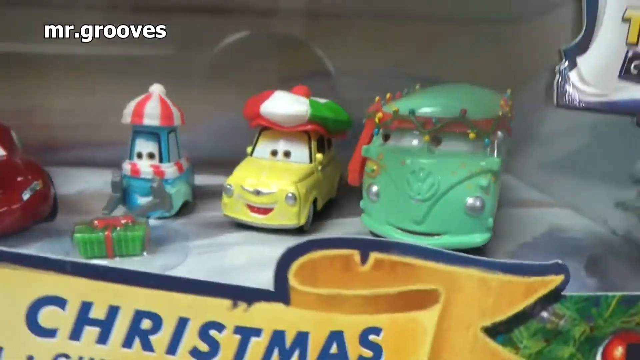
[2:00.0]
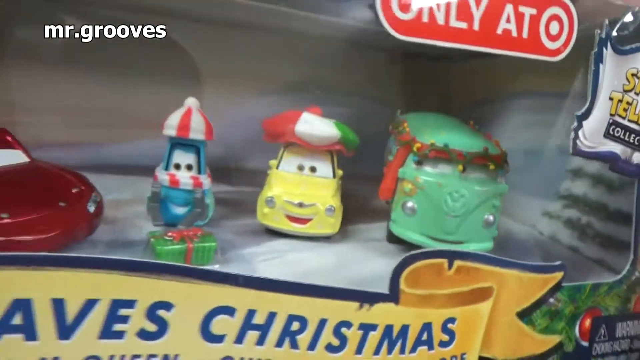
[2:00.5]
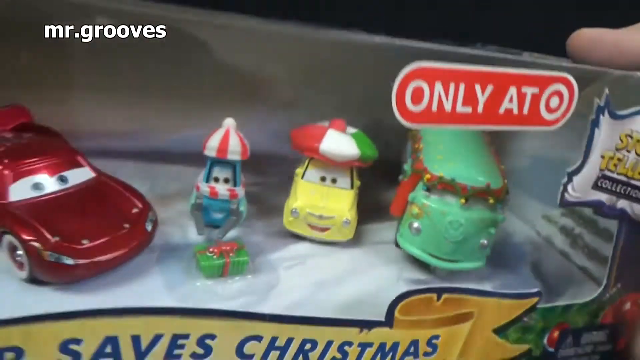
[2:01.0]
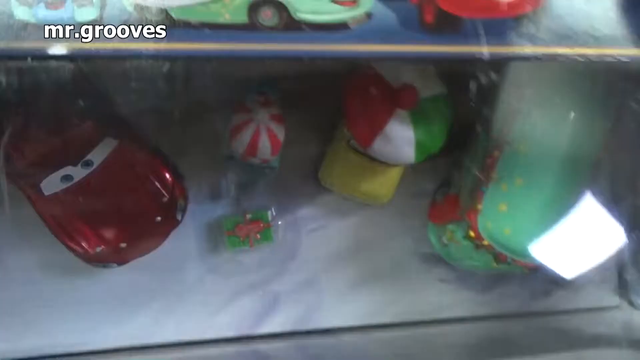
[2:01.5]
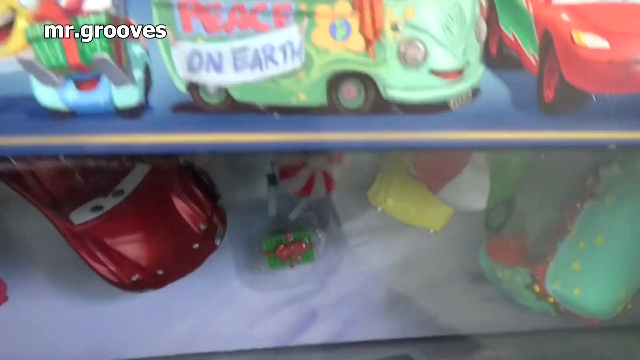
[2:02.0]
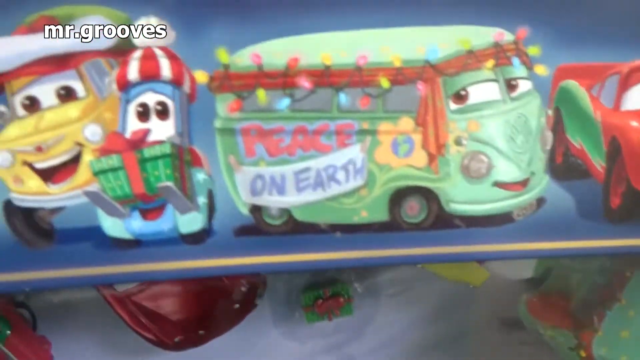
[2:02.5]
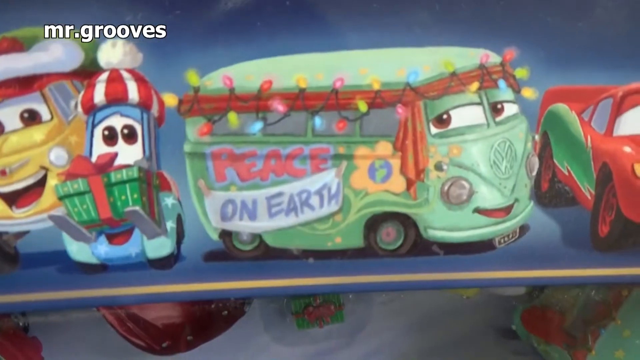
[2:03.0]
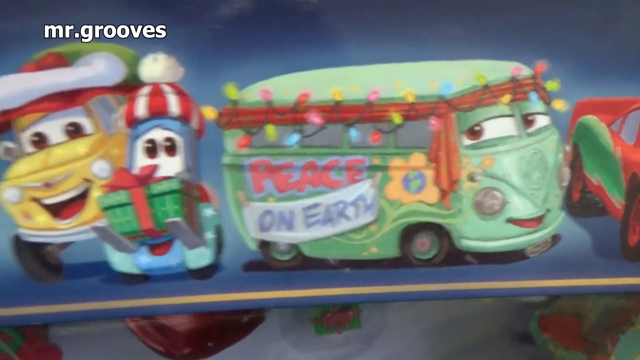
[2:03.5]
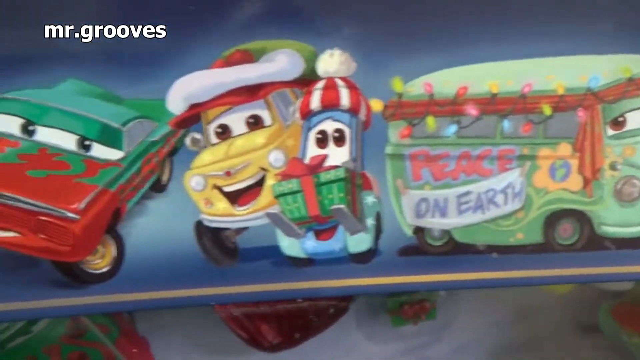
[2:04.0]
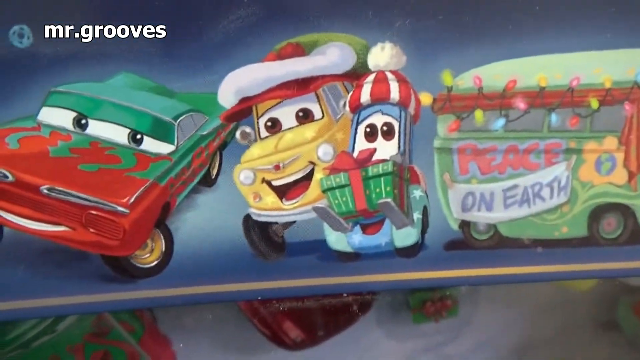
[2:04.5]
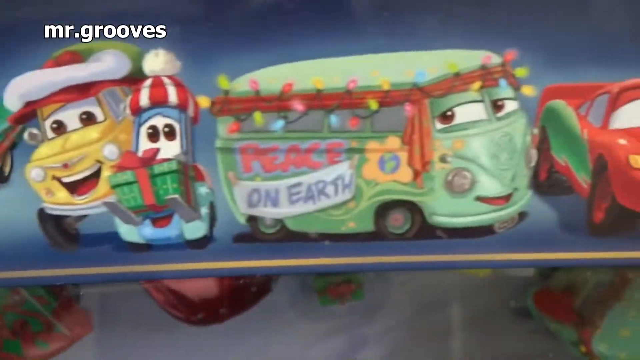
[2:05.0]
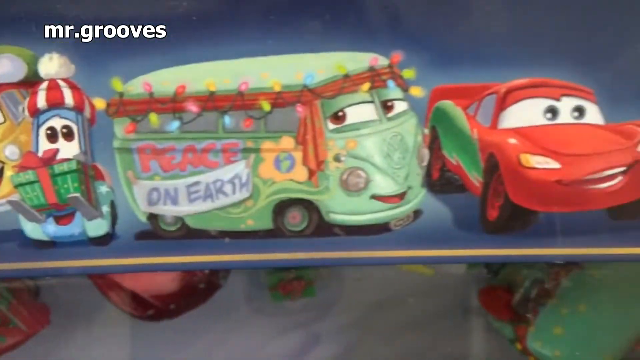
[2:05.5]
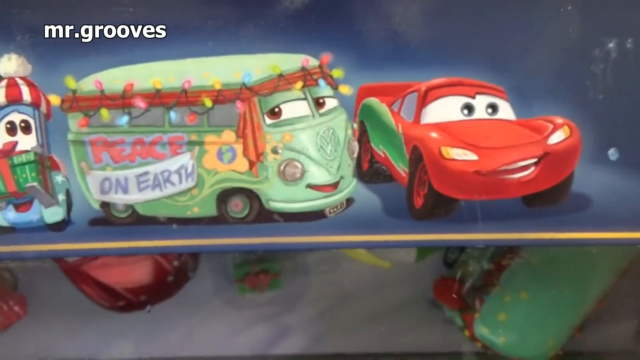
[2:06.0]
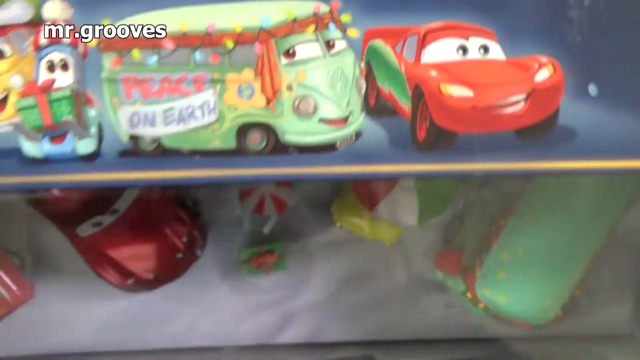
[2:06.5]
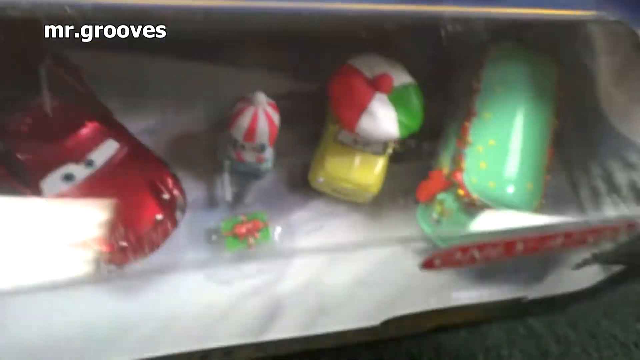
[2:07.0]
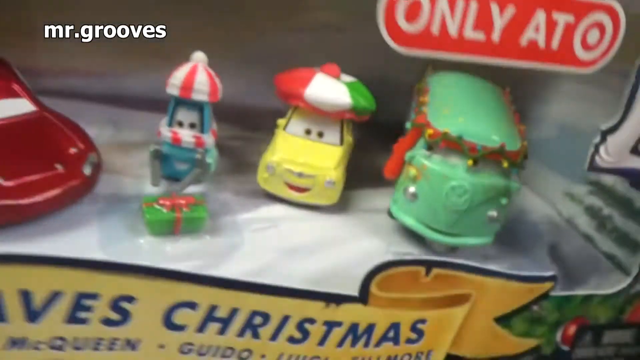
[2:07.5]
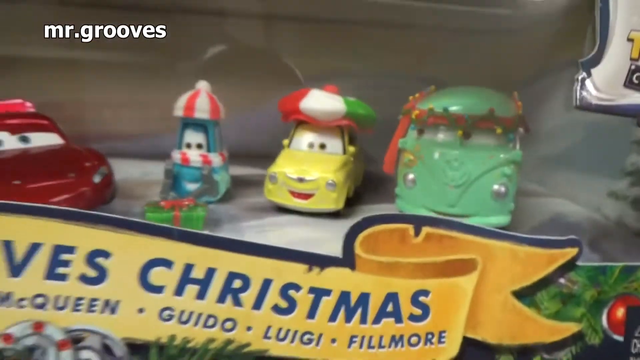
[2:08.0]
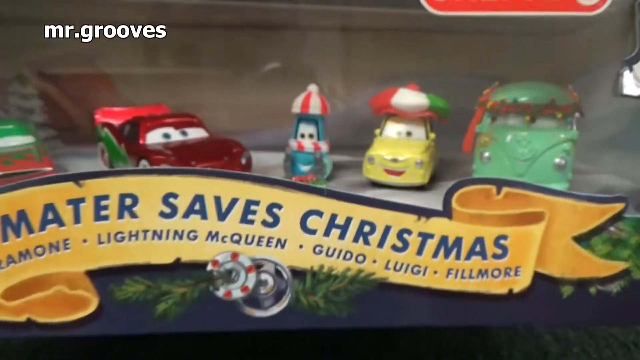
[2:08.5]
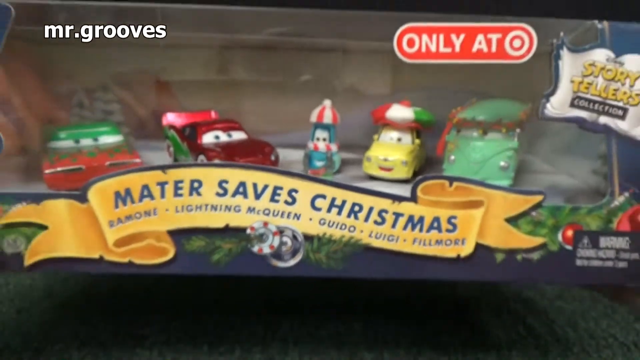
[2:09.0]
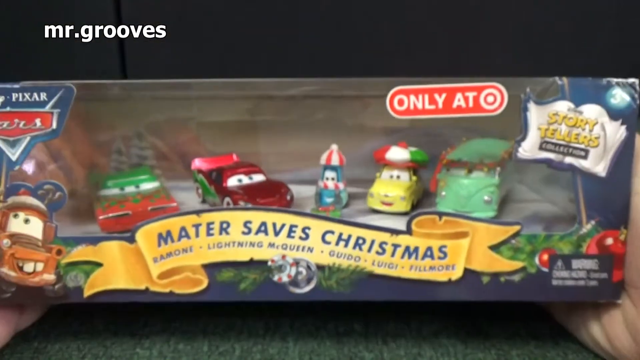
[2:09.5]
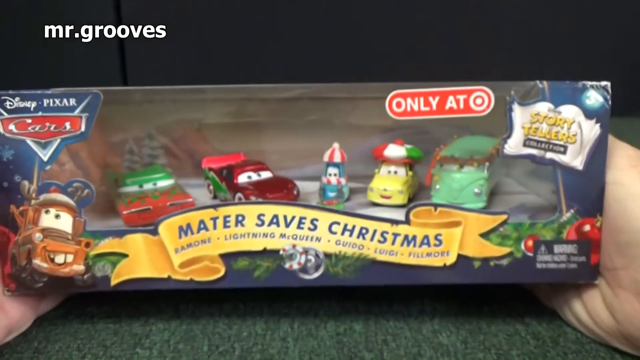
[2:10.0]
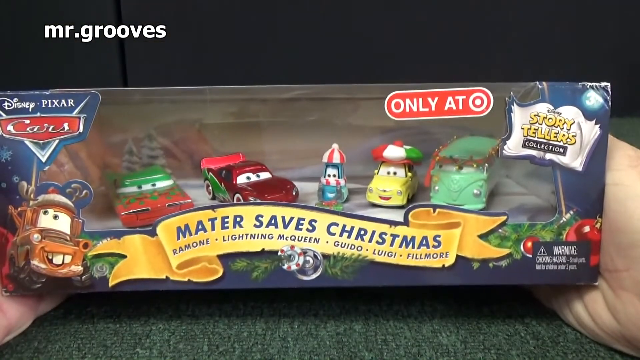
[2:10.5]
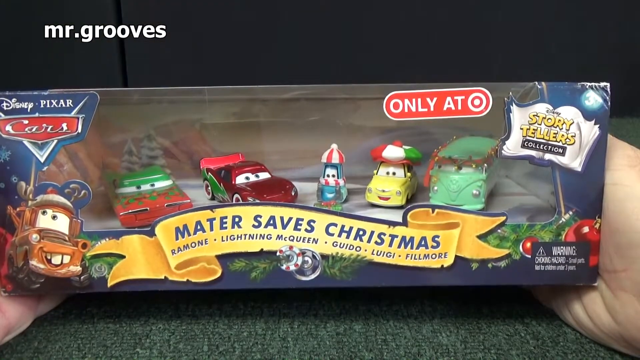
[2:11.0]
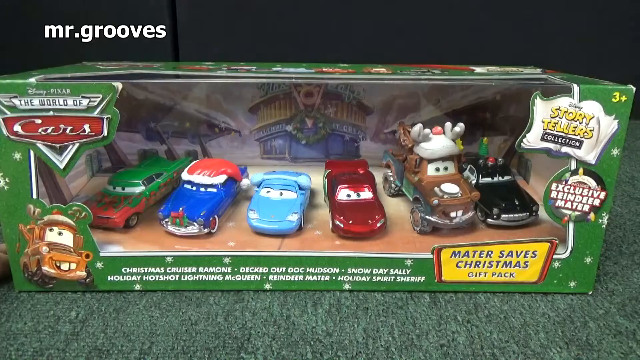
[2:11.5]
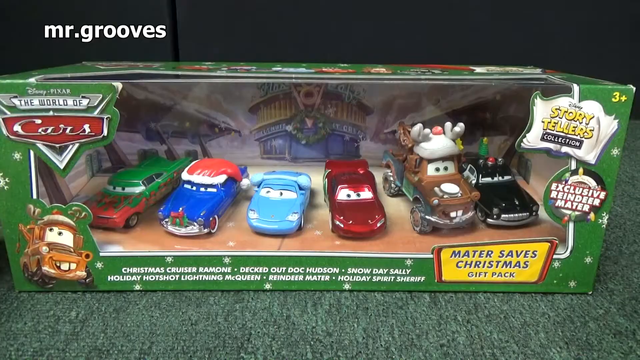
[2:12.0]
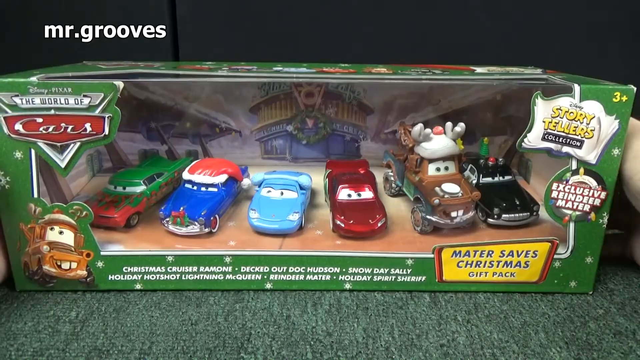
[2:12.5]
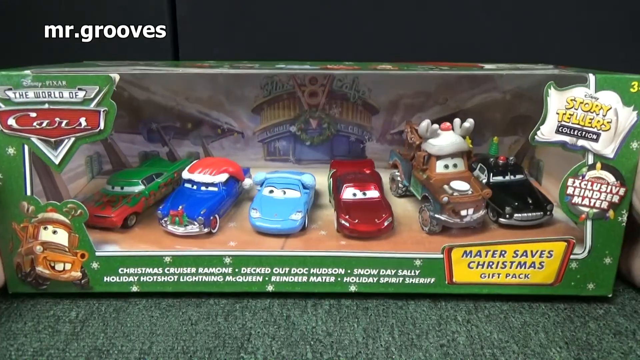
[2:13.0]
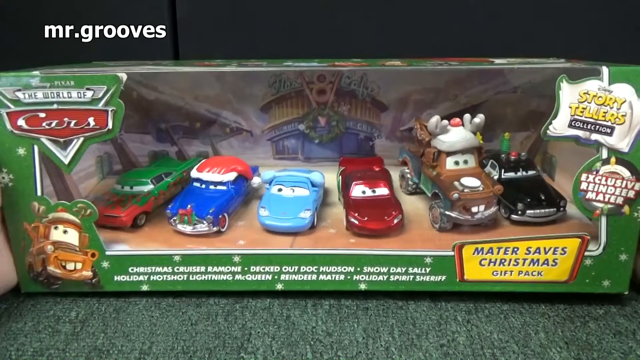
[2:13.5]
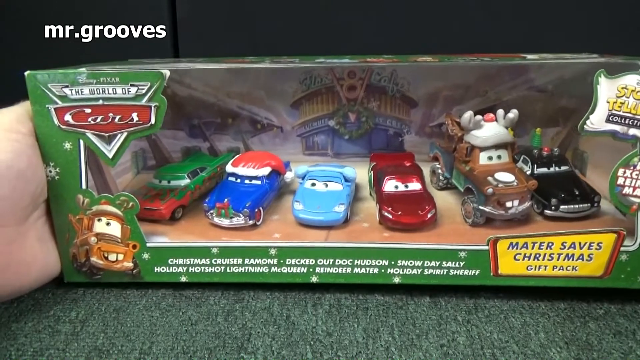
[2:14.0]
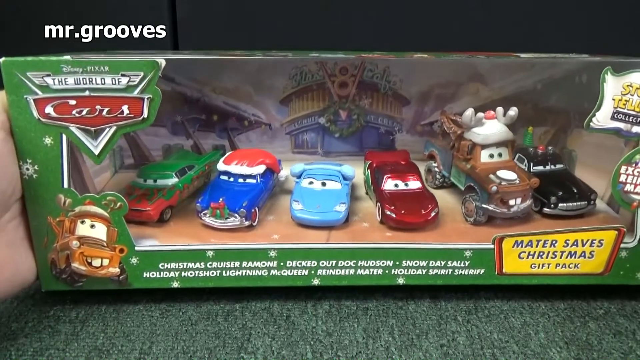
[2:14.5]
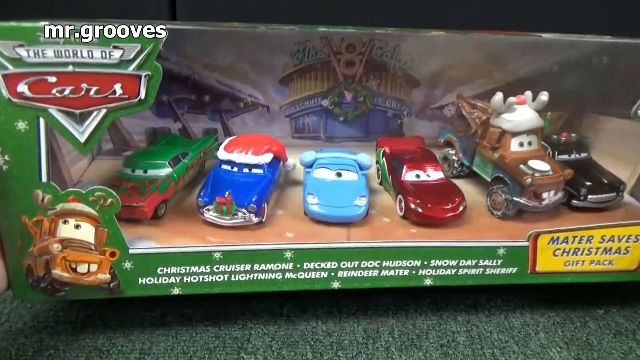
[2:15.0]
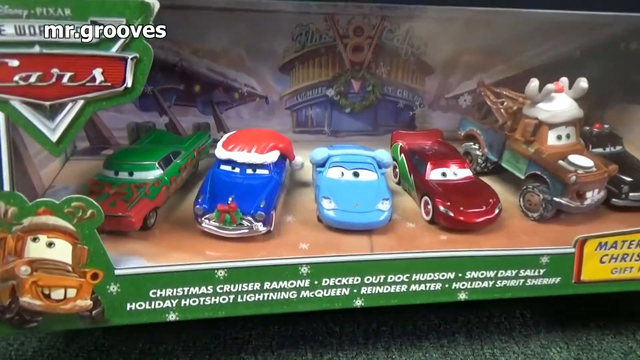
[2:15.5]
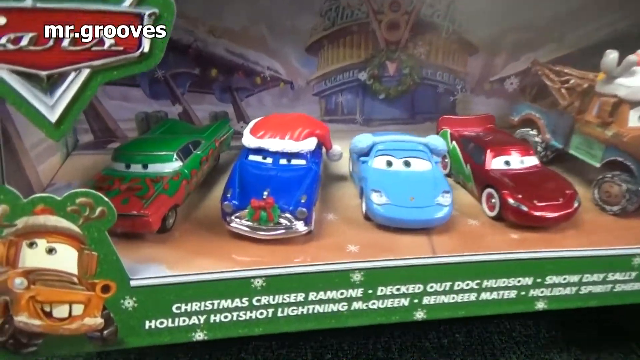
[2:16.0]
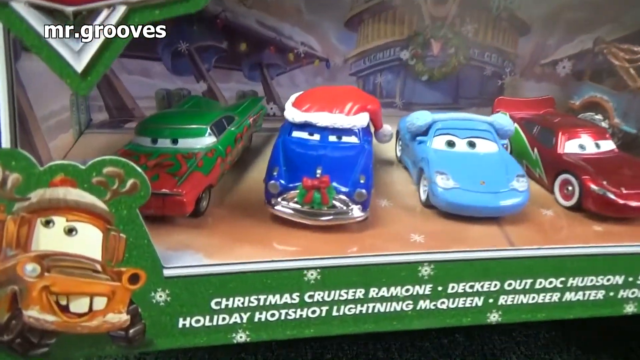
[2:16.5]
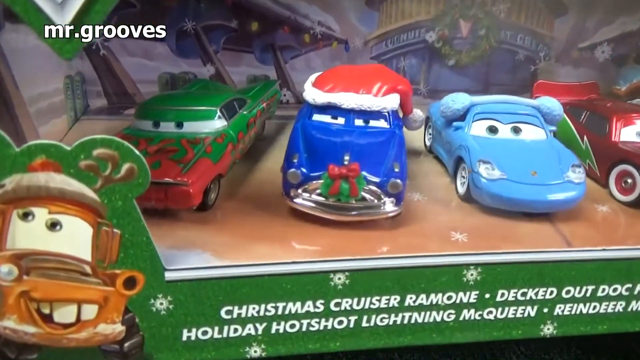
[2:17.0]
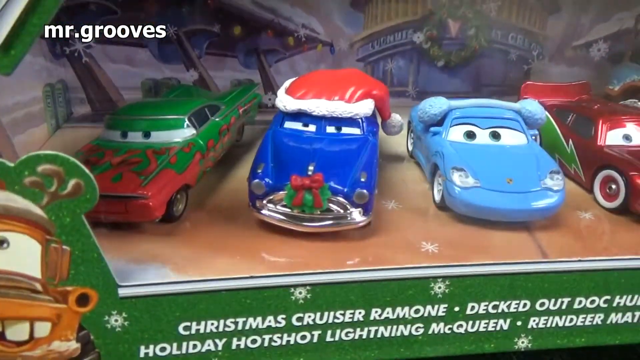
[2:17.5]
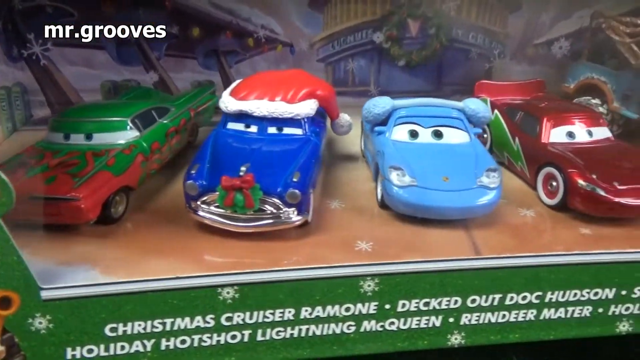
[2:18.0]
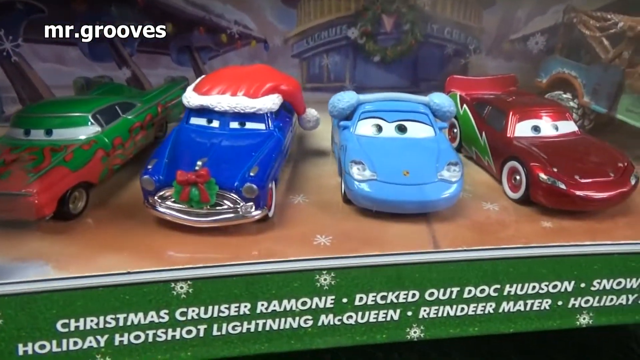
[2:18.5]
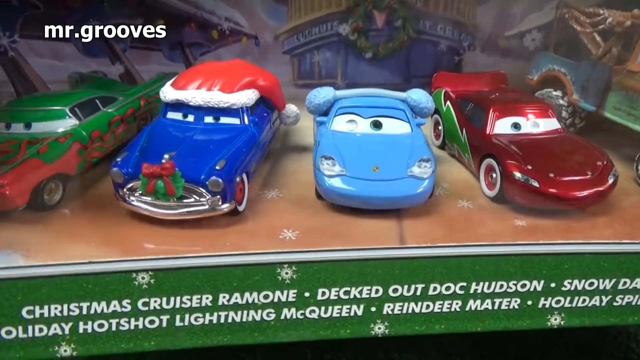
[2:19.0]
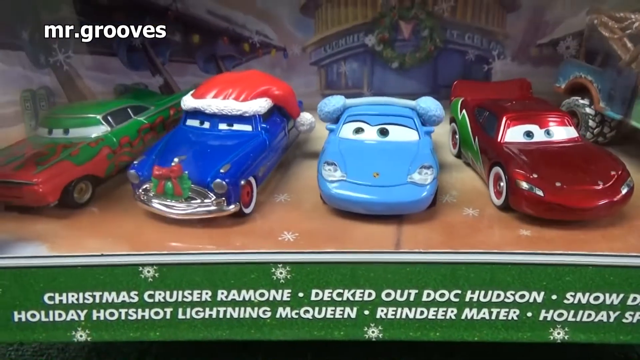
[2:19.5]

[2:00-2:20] The packaging shows different cars with eyes and different designs, with the cars laughing at the top of the packaging, along with a bus. The front of the packaging is shown again; in the top left corner, "Disney Pixar" and "Cars" are written. On the right at the top of the packaging is "storyteller's collection," and there is a warning at the bottom. On the bus at the top part of the packaging, "peace on earth" is written with a picture of planet Earth.